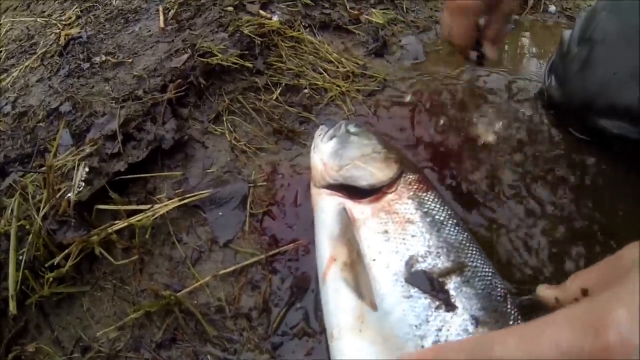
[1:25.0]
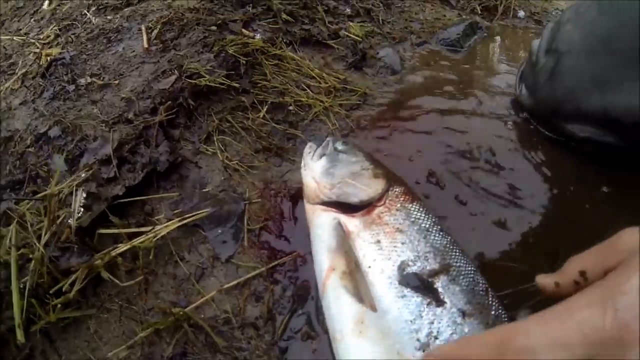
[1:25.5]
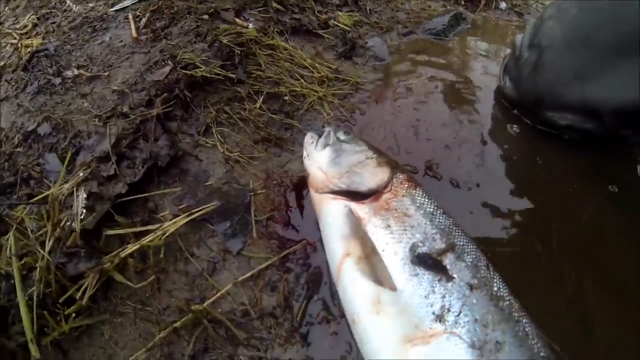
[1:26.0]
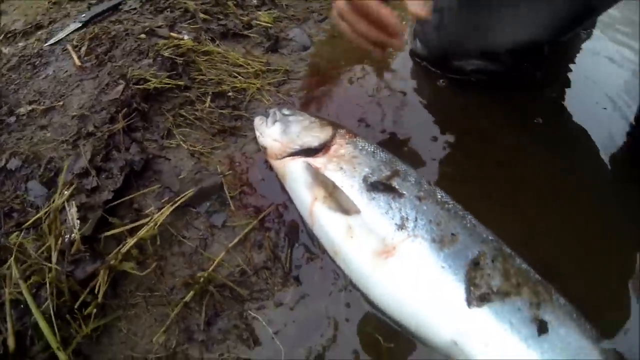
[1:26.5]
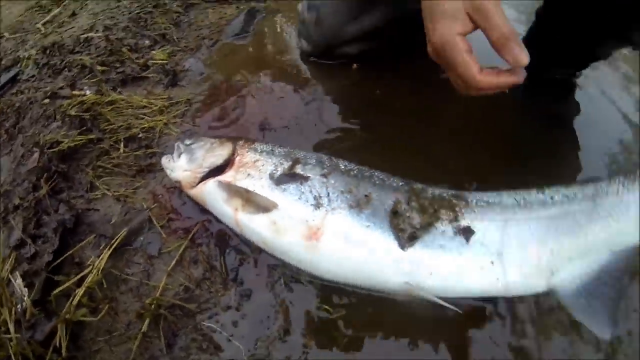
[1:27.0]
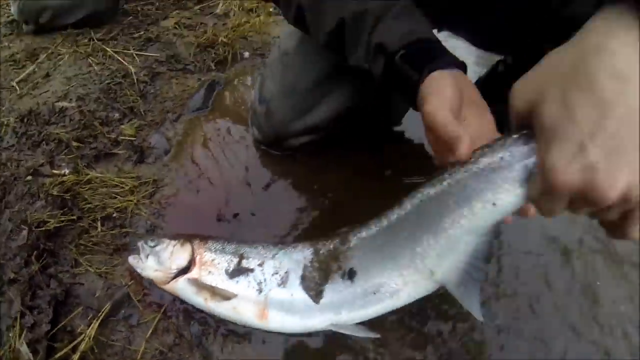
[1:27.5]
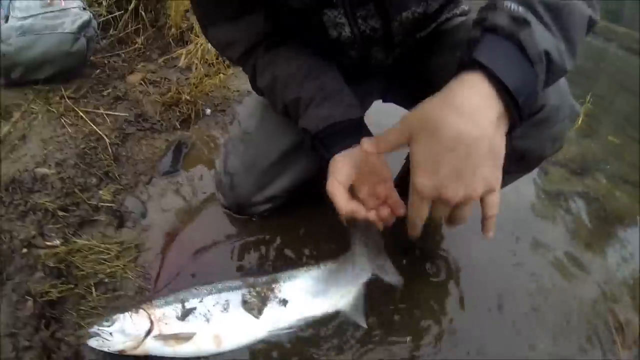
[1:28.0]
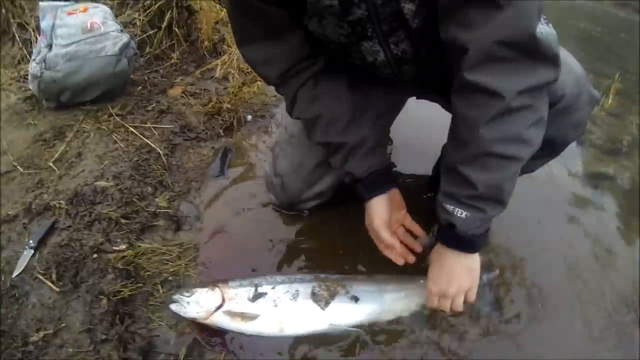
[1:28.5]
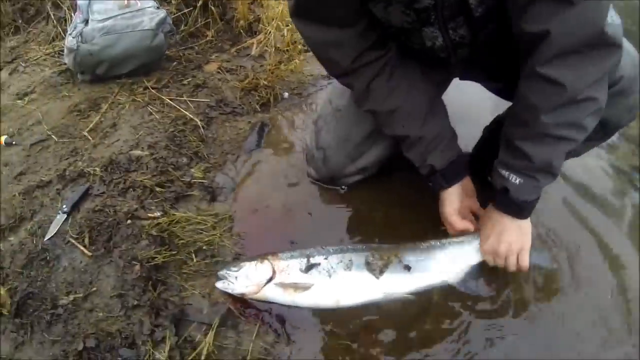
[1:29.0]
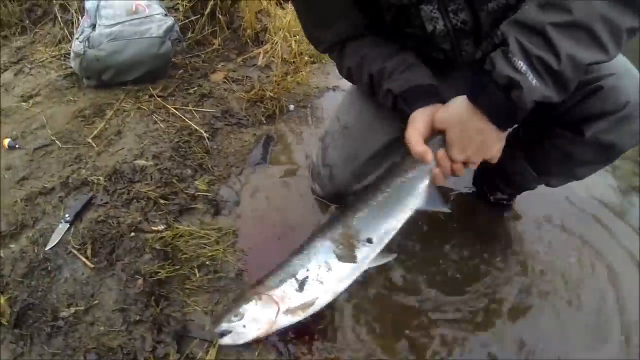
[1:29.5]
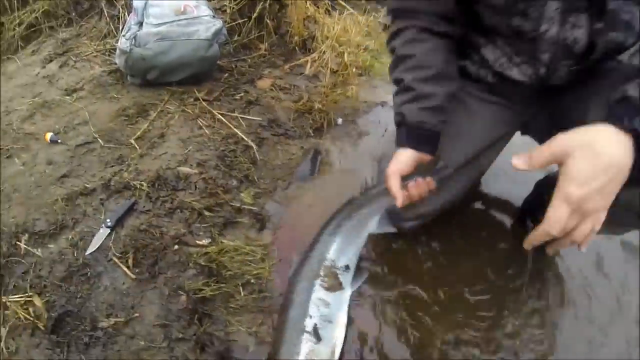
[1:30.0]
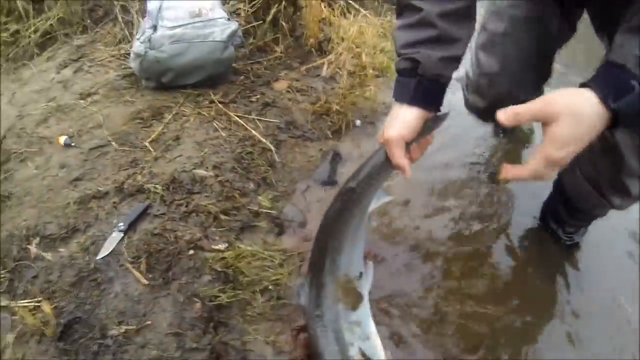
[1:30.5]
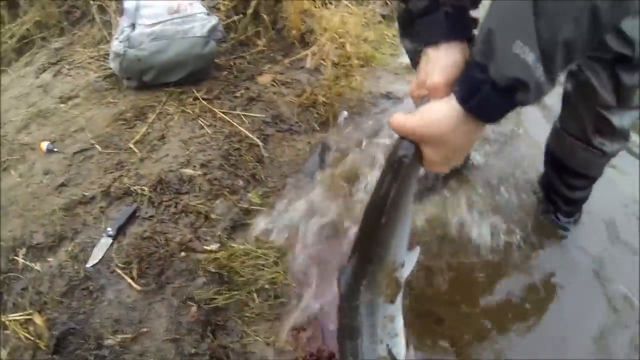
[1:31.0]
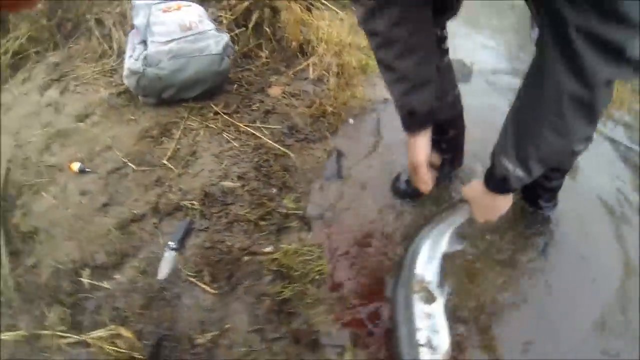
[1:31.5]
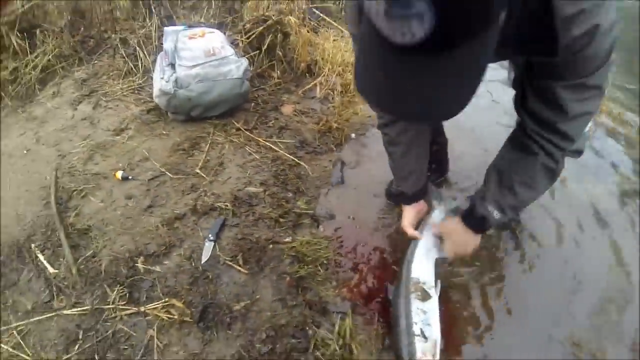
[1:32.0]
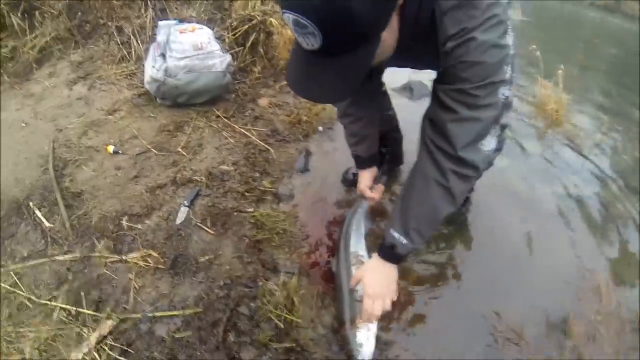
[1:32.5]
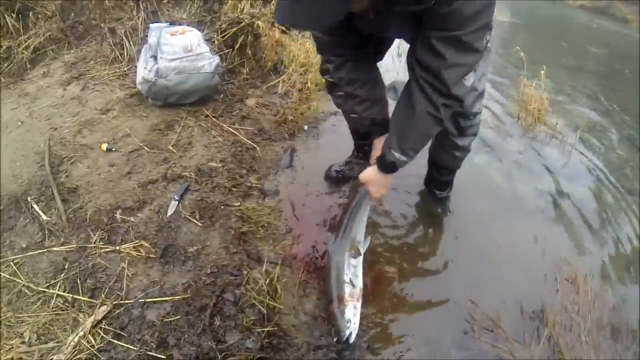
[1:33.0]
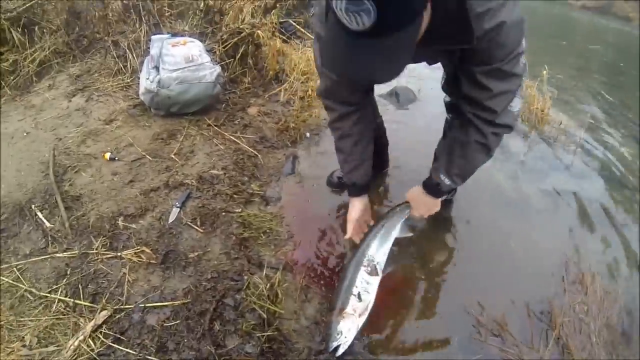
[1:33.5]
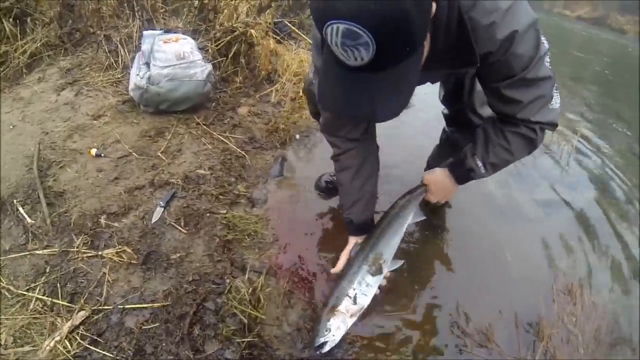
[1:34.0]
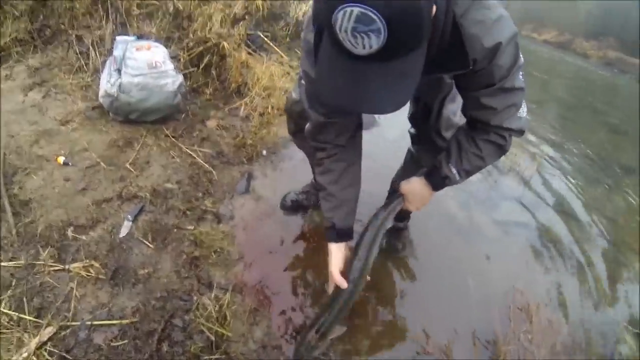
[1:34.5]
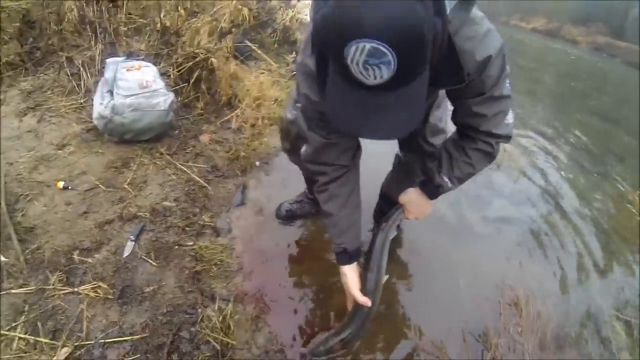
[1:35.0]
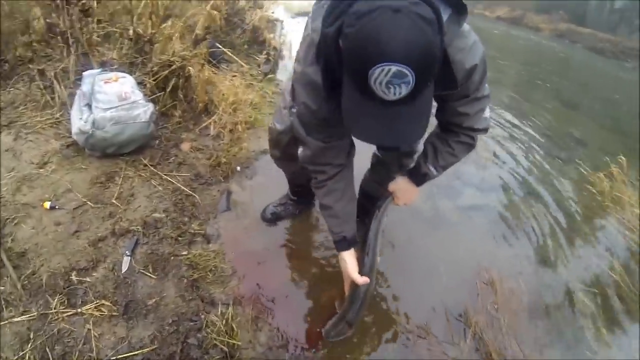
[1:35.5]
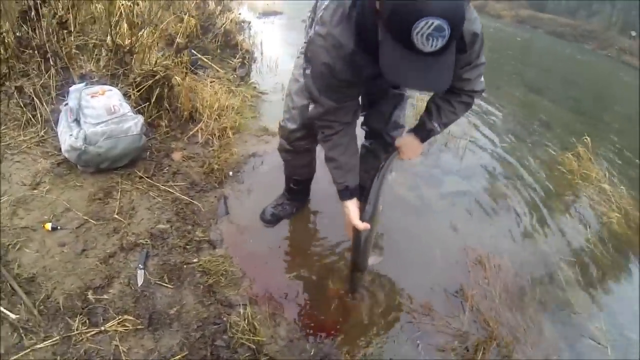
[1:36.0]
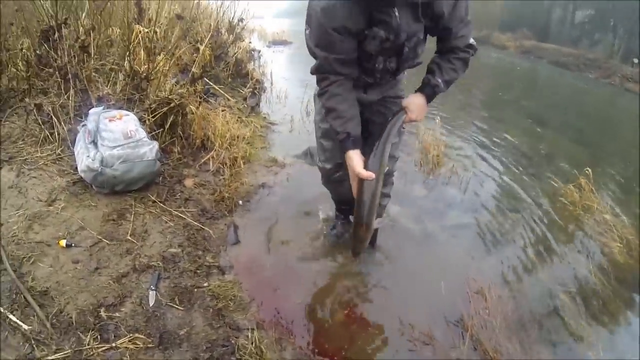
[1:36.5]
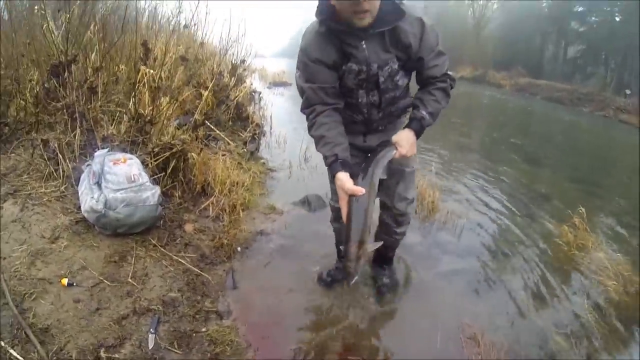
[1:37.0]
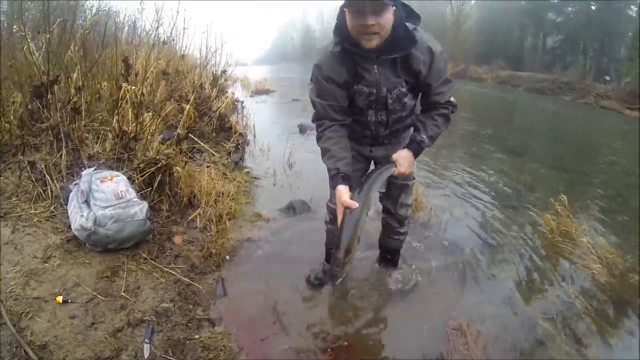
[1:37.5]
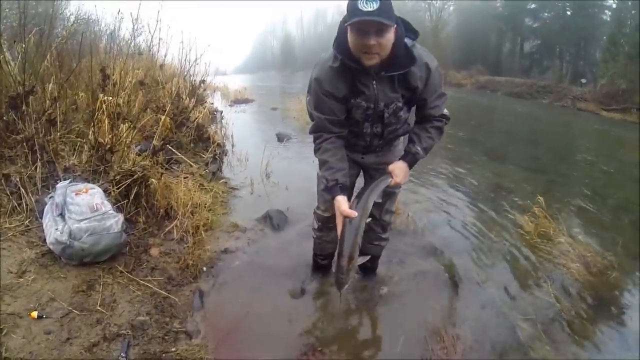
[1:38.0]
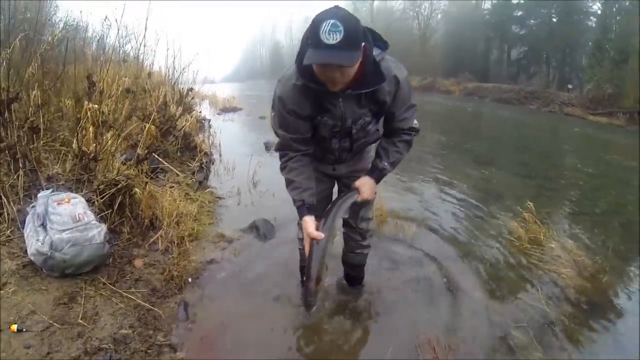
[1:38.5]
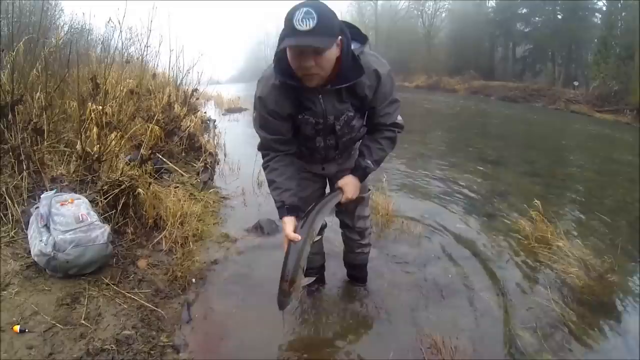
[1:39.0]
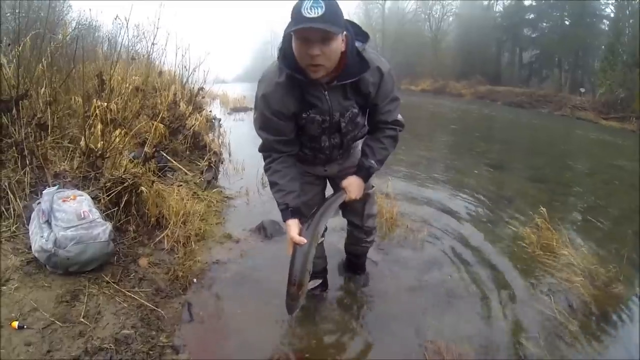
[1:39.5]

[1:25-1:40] The fish lies on the bank of the river as the man raises it out of the water, looking like he struggles a little with it, apparently because it is slippery. The water is kind of pink or red around where the fish was lying, and water drains out of or off the fish as he picks it up. Once he has a grip, he holds the fish in his left and right hands about waist high with the mouth and eye down, letting the water or fluids run out. His fishing boots are in the river at the bank, and by the end he is standing completely in the river, showing the fish to the camera. His face is visible as he looks at the camera and talks, apparently about what to do with the fish after catching and killing it. The only change in the water around him is the ripples he makes as he moves.